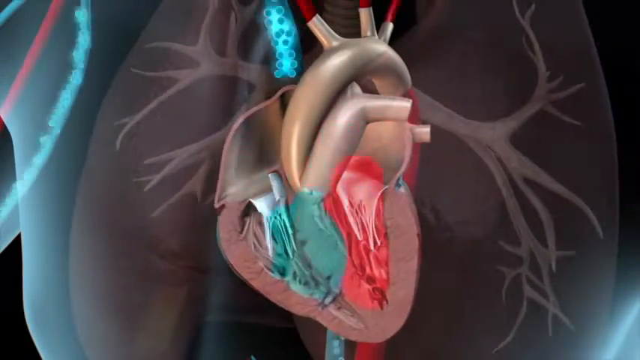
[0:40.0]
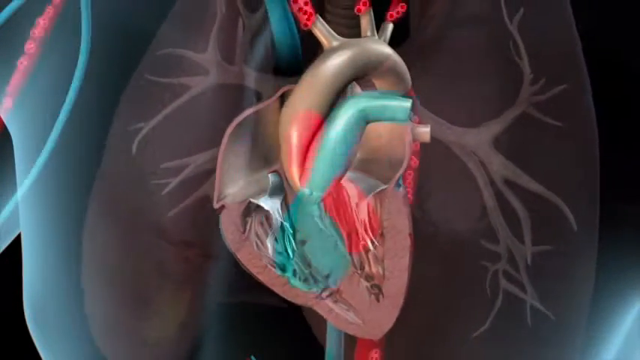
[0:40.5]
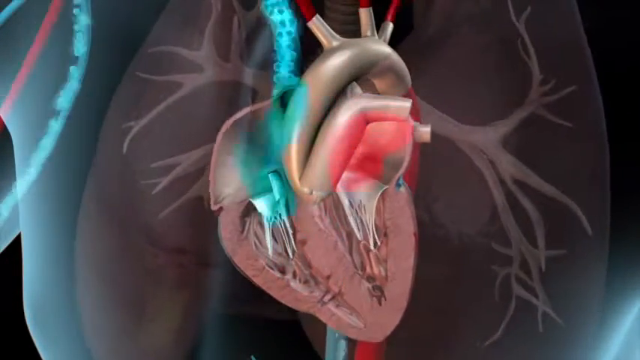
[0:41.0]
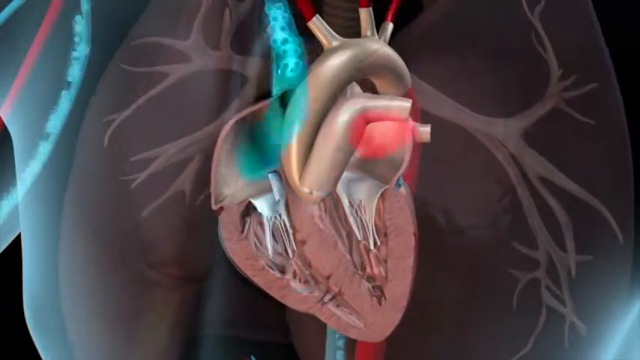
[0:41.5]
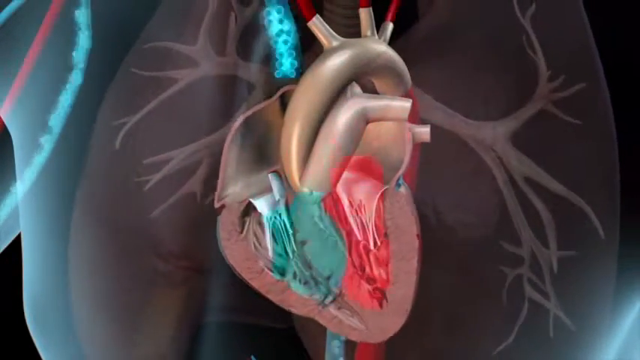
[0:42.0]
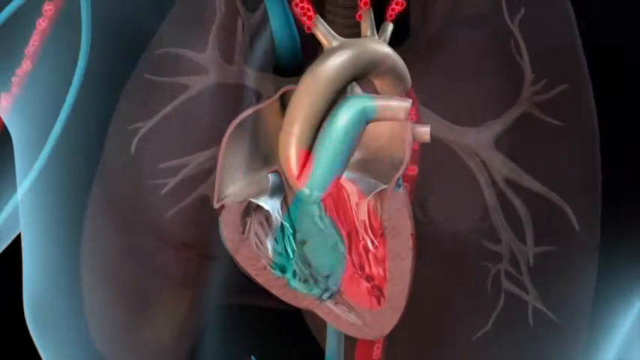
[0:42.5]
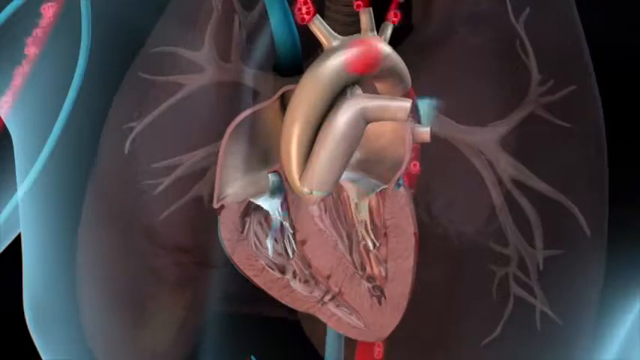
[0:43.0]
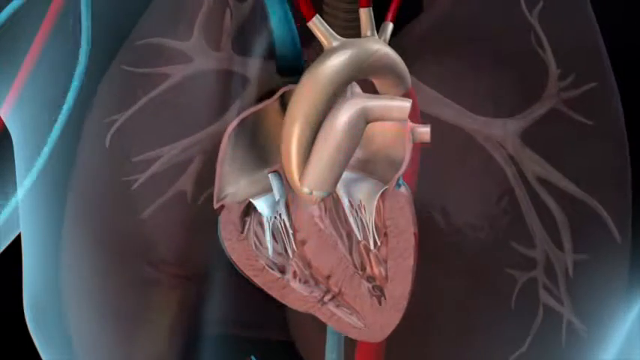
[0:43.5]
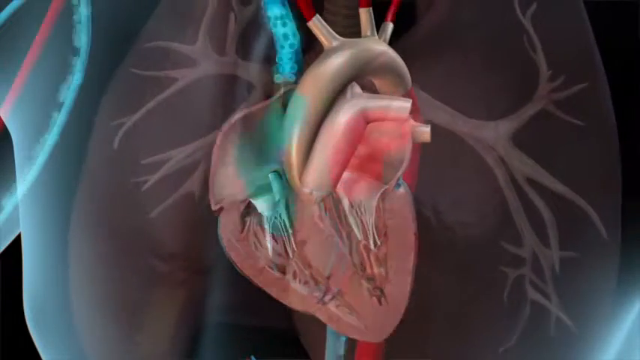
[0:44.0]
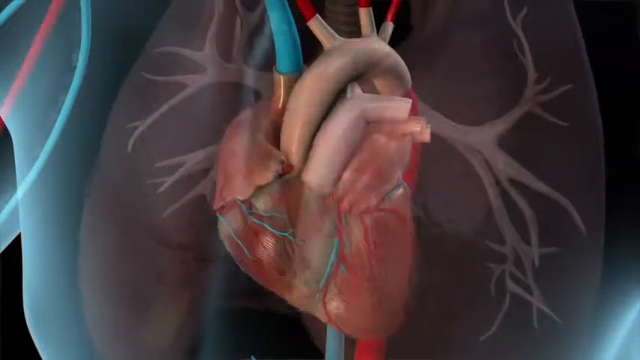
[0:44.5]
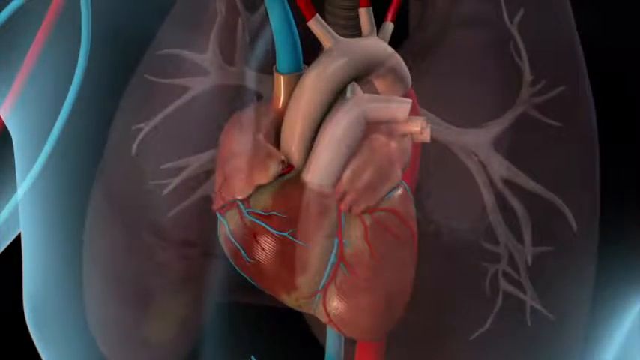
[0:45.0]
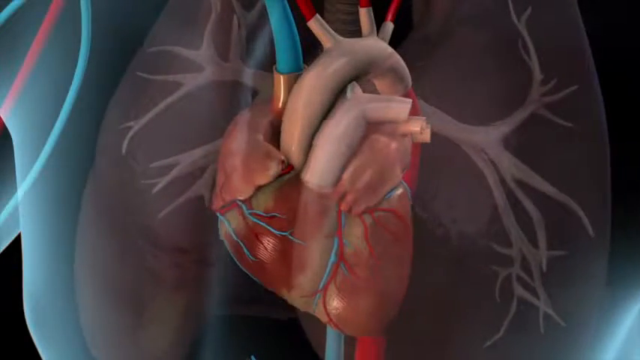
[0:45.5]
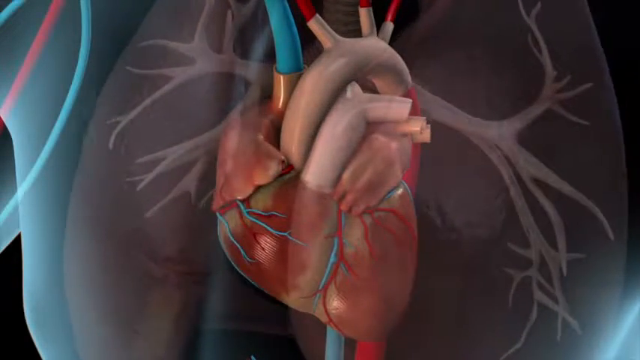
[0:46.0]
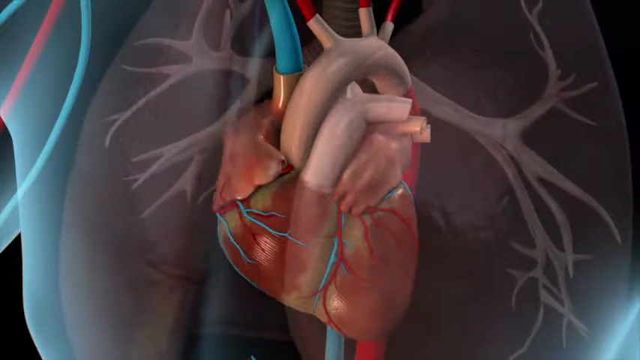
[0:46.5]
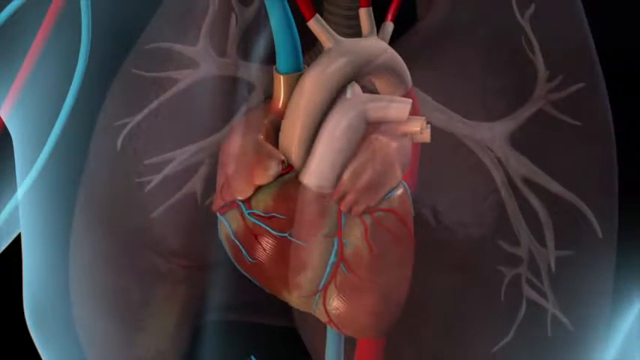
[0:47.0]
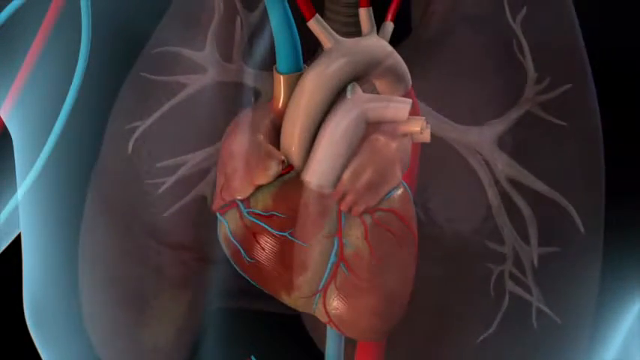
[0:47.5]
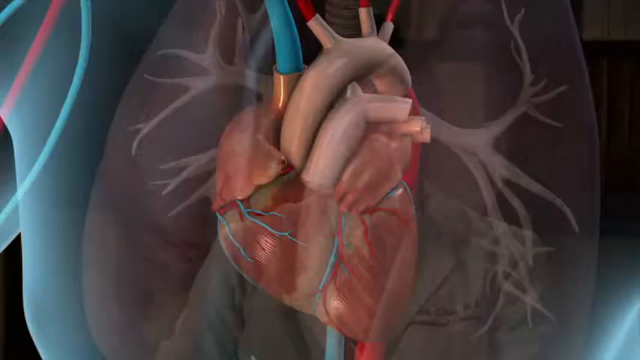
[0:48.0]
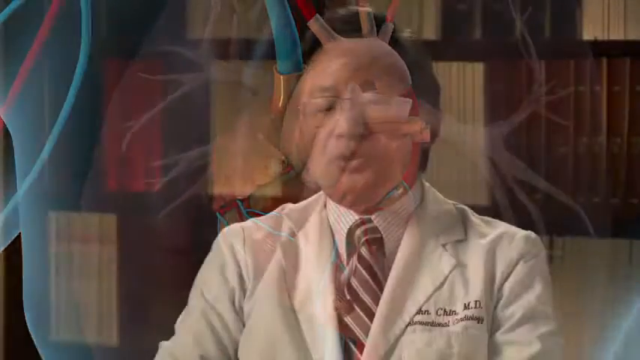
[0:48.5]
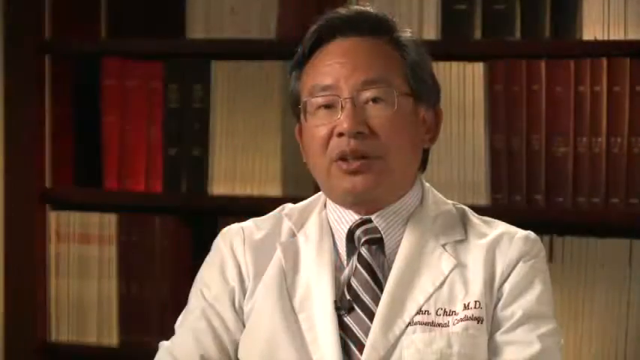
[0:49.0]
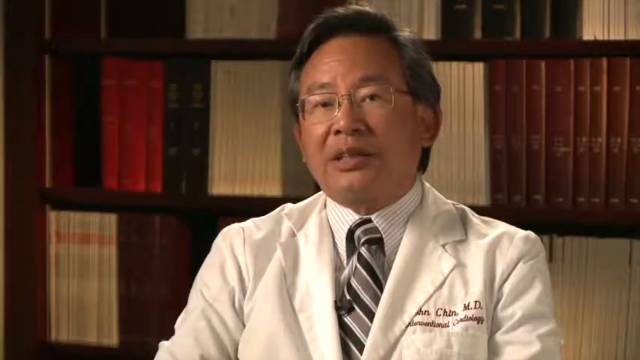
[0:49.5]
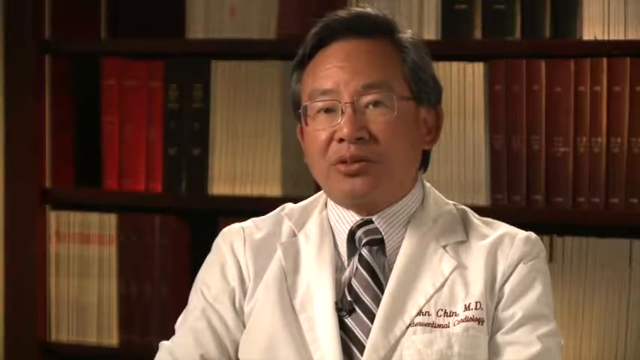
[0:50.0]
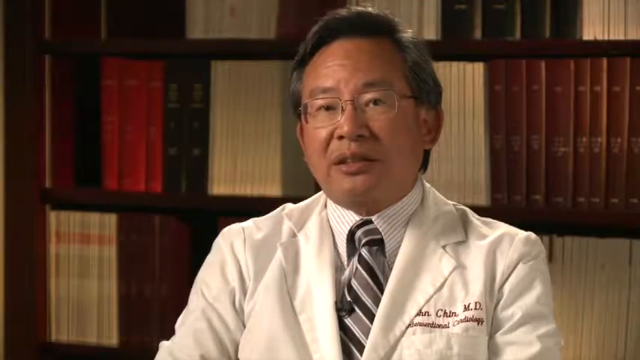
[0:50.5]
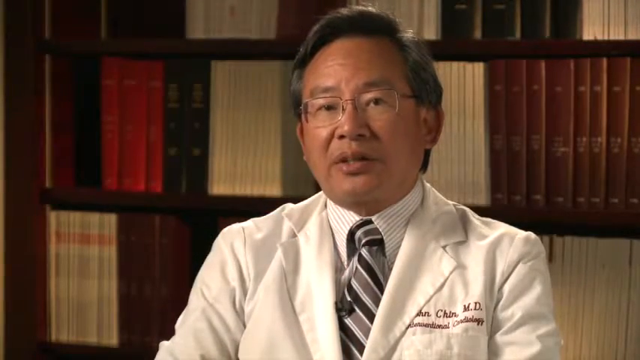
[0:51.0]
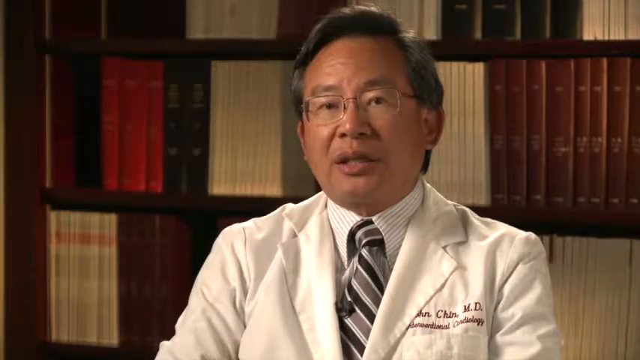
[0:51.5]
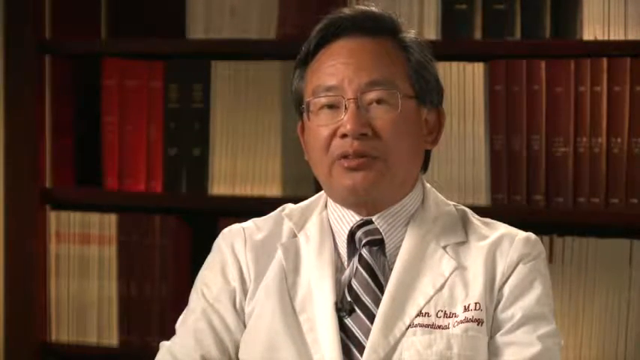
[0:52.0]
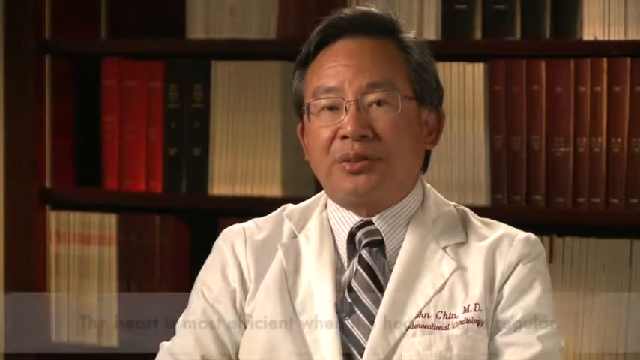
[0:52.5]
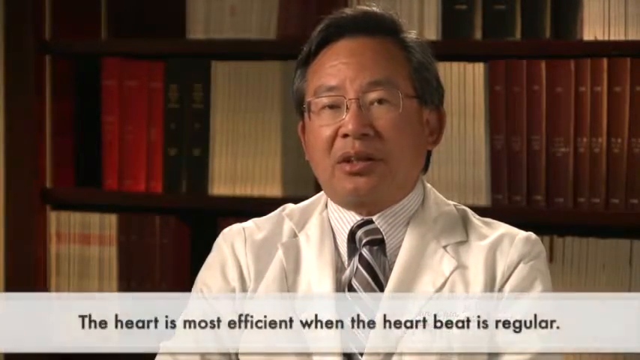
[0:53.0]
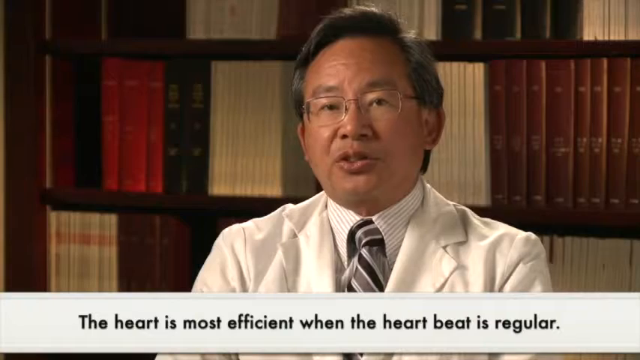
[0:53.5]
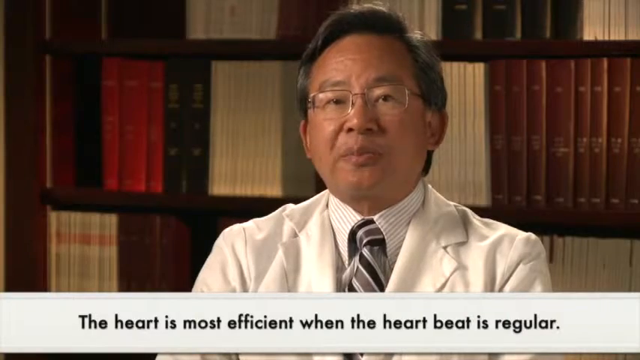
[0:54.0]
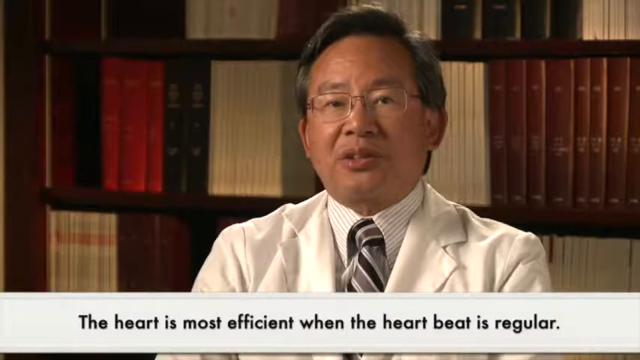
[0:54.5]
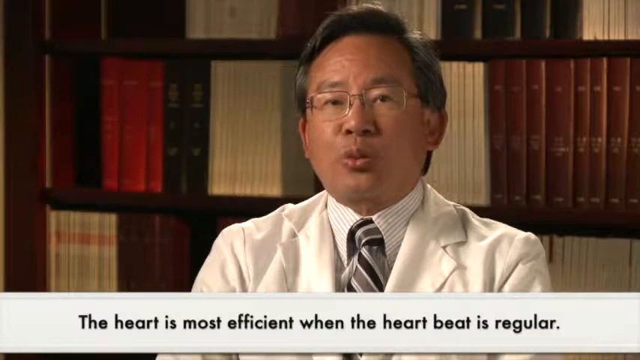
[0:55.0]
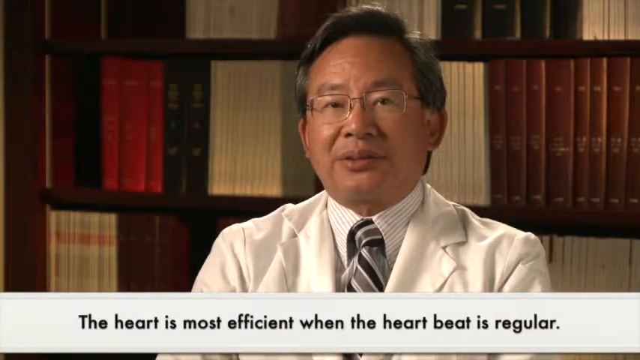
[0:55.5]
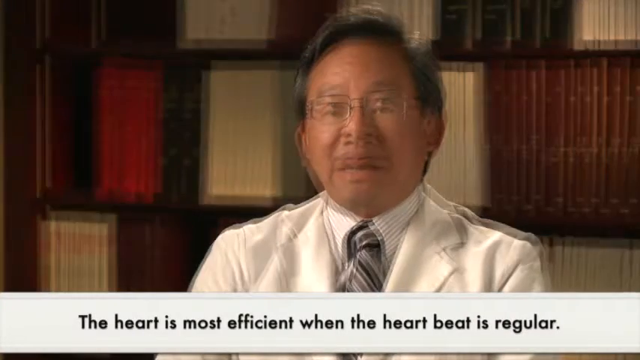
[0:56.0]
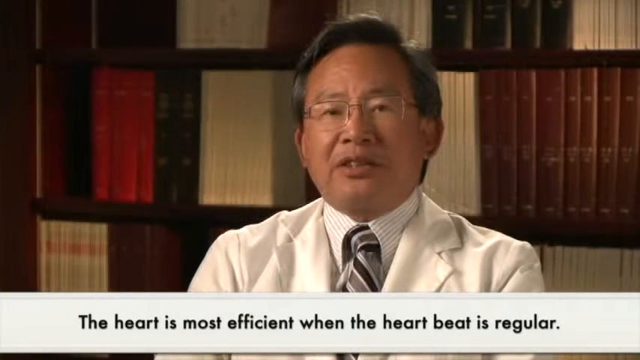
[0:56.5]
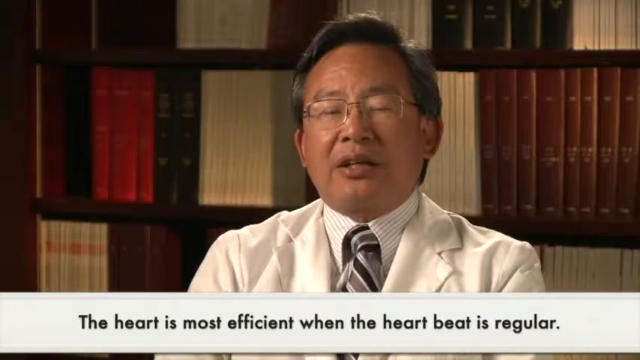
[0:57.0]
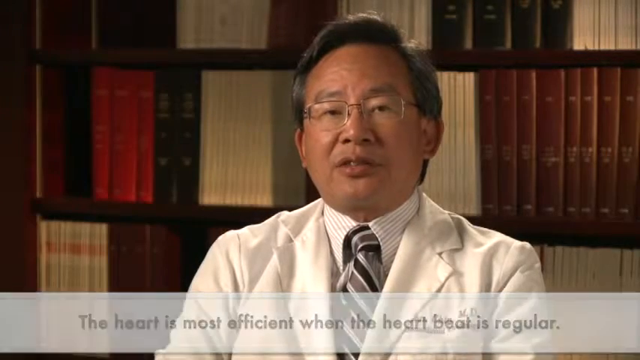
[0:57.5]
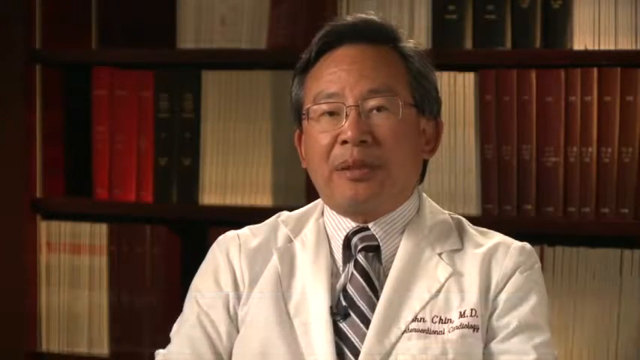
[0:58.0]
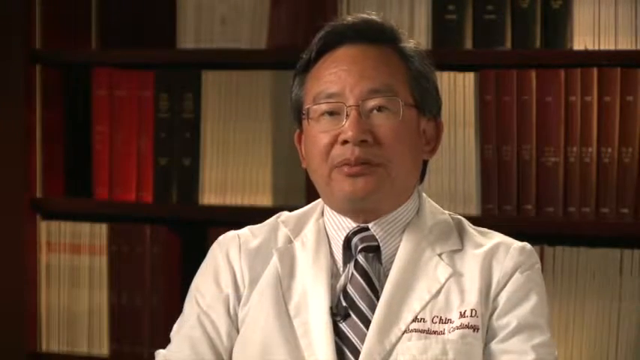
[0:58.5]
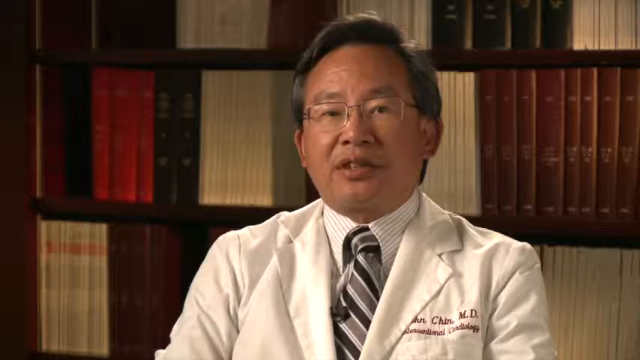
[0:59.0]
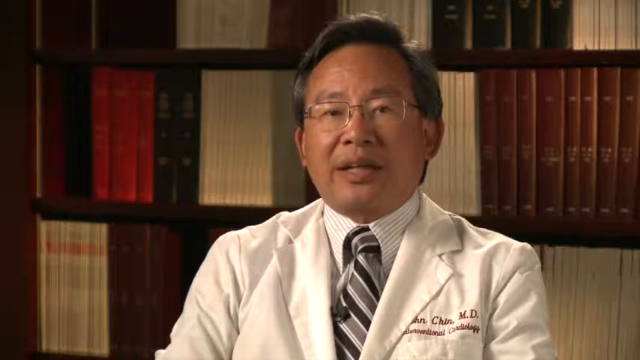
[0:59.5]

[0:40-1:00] An animation of the heart shows blood flow into the heart by an artery colored blue, with the blue flowing into the heart. Blood flow out of the heart is shown in red, flowing out toward the top. In this animation the heartbeat is very fast, and the red and blue blood is attempting to enter the heart at the same time rather than sequentially. The animation of blood flow ends, and the heart takes on a more realistic look, showing a pinkish red rather than the animation colors; the heart is still beating. The view fades out to show a doctor in a study, with books behind him, sitting, facing the camera and speaking. A text box along the bottom reads "The heart is most efficient when the heartbeat is regular."